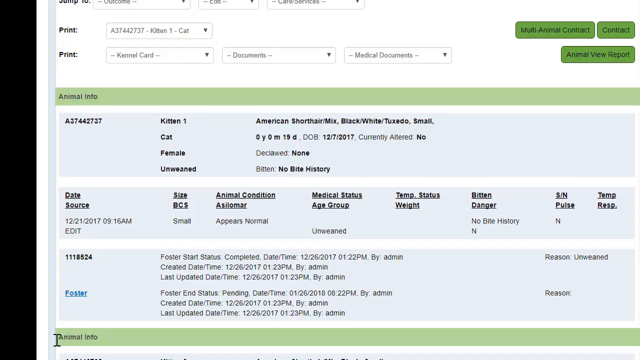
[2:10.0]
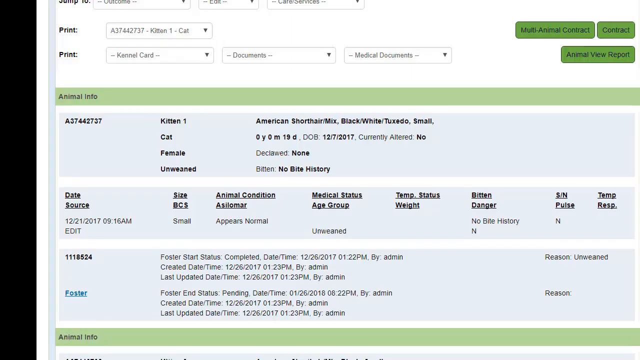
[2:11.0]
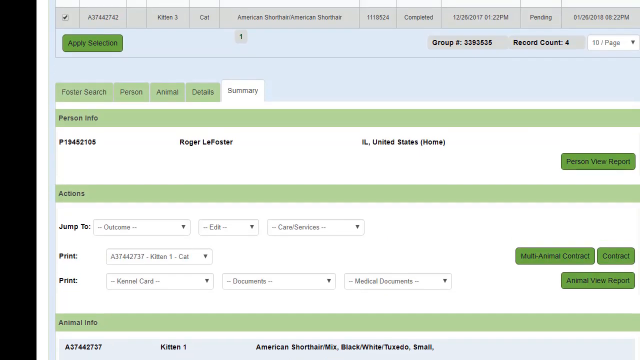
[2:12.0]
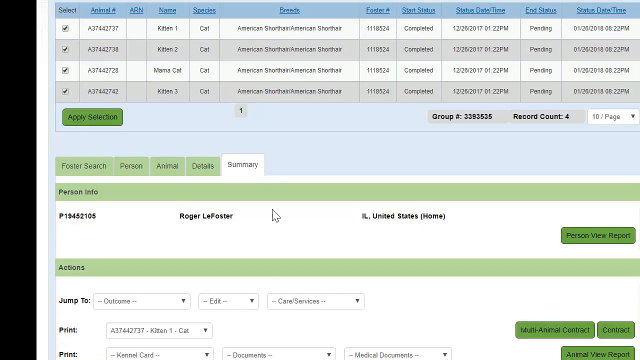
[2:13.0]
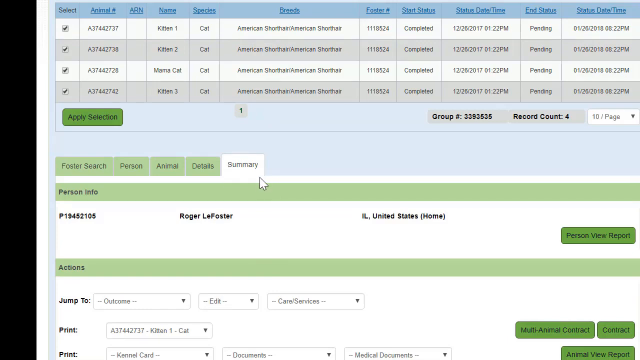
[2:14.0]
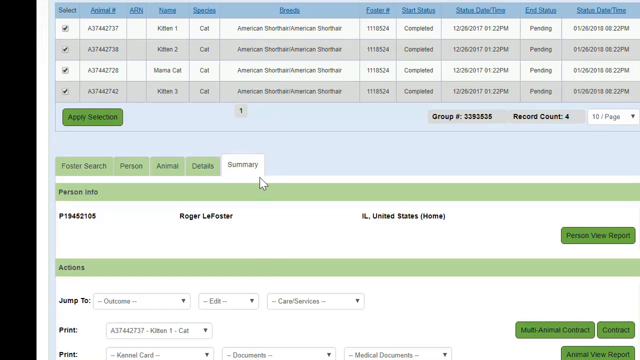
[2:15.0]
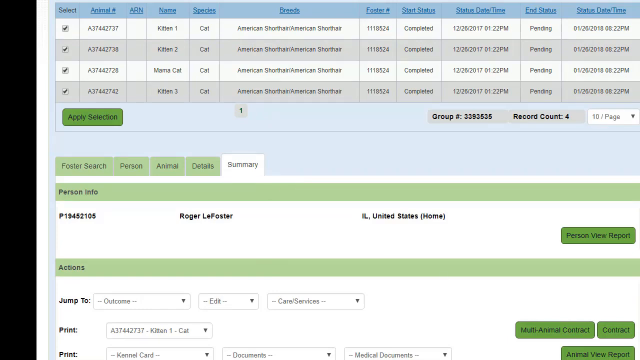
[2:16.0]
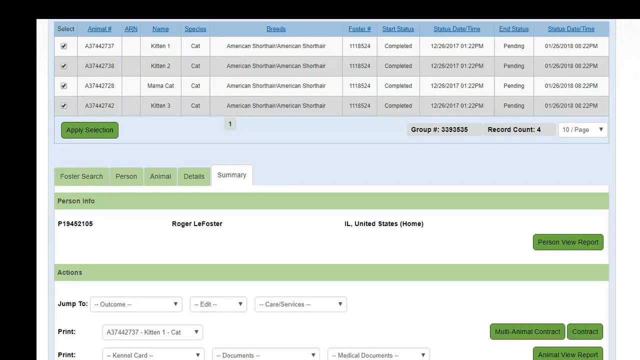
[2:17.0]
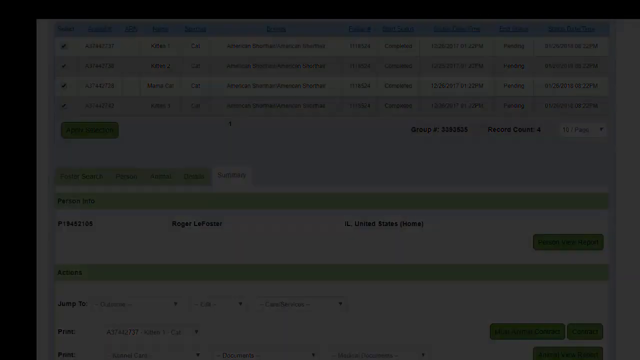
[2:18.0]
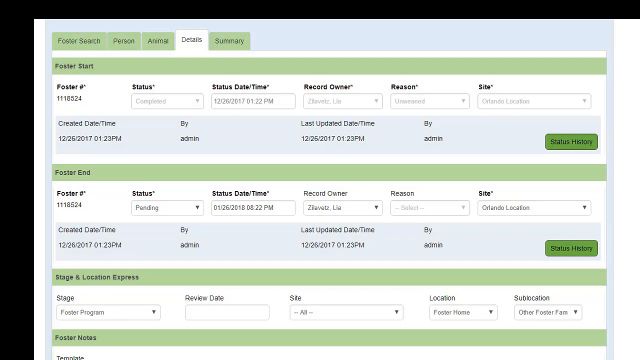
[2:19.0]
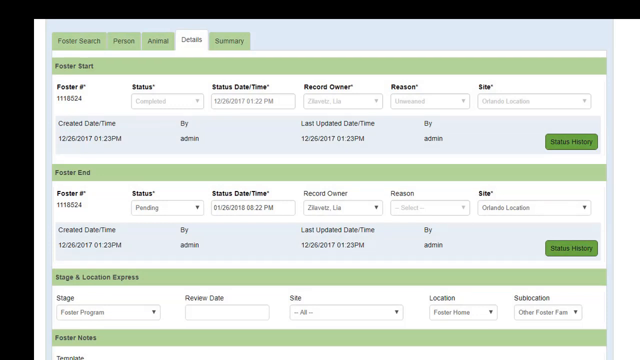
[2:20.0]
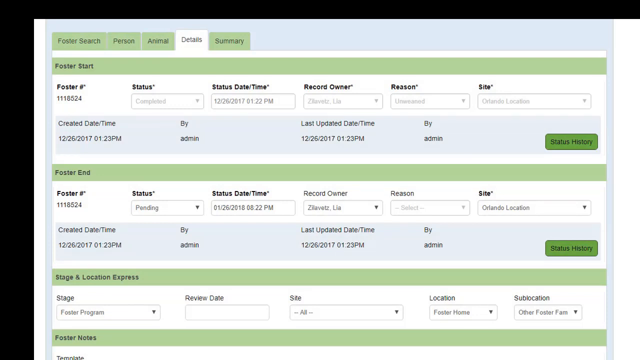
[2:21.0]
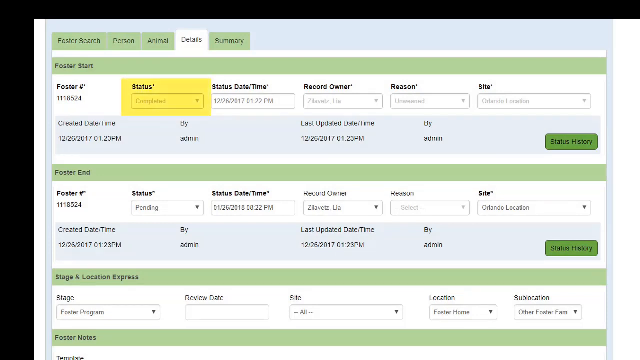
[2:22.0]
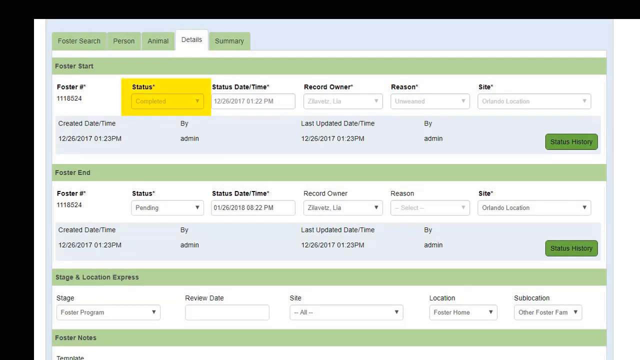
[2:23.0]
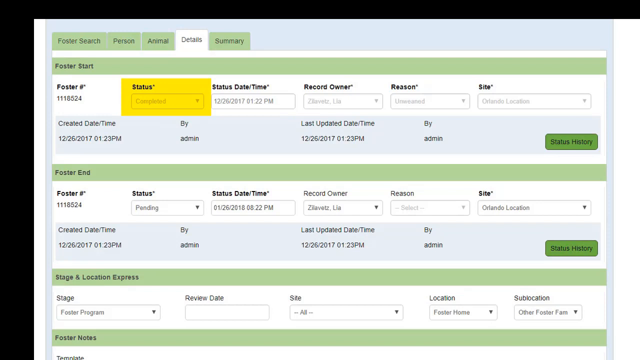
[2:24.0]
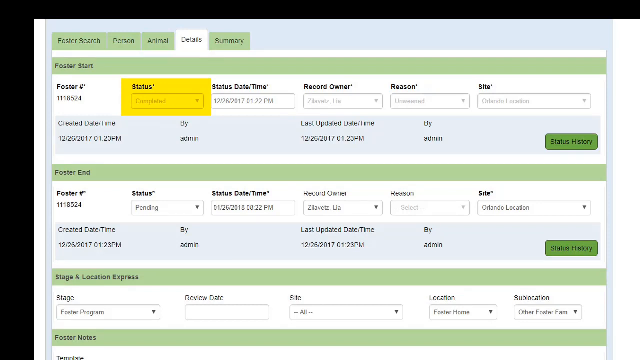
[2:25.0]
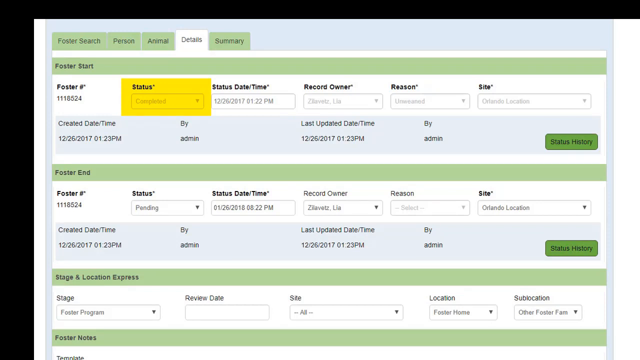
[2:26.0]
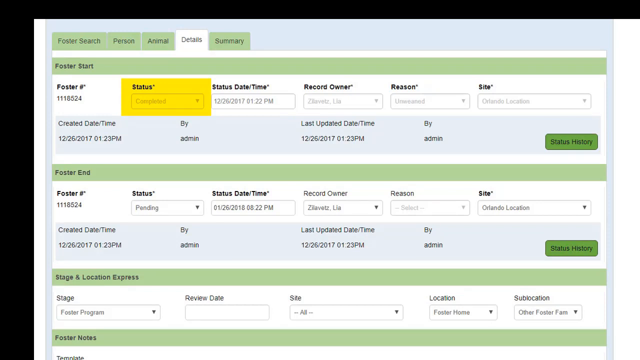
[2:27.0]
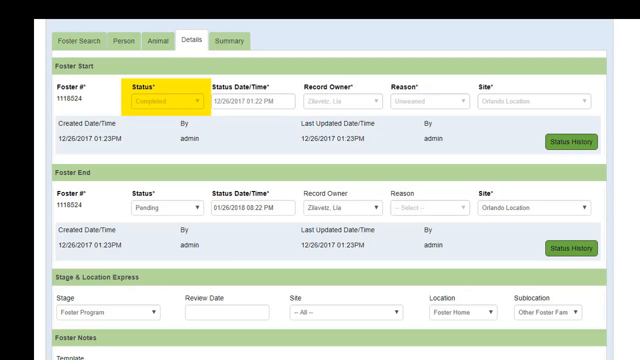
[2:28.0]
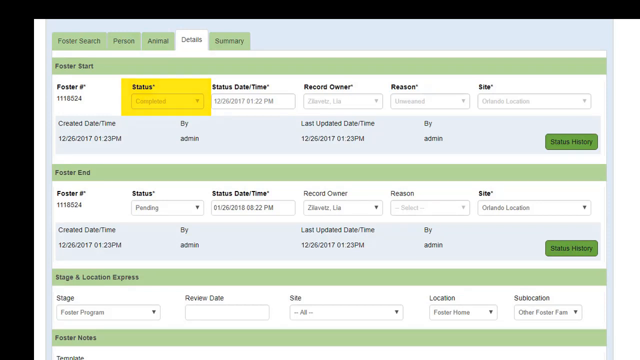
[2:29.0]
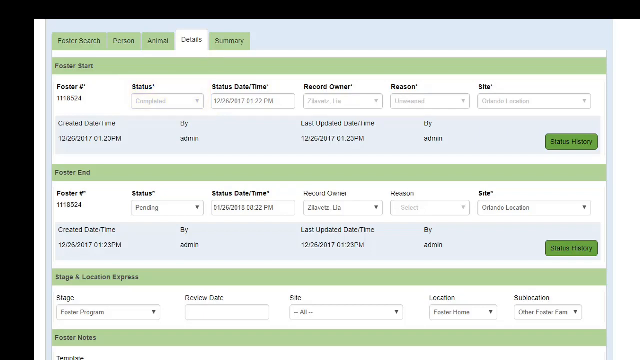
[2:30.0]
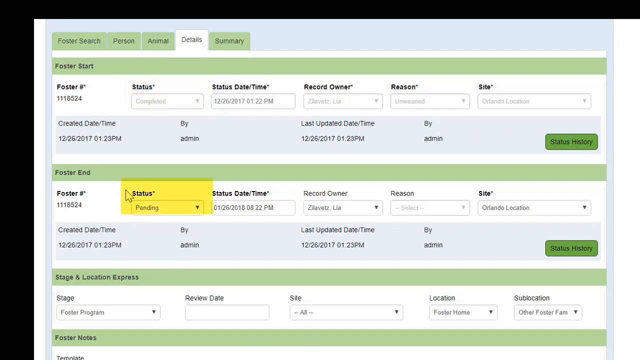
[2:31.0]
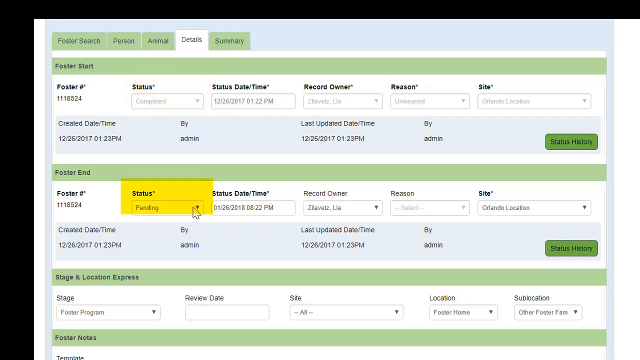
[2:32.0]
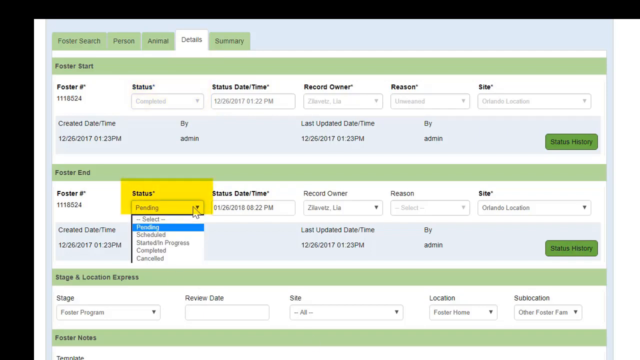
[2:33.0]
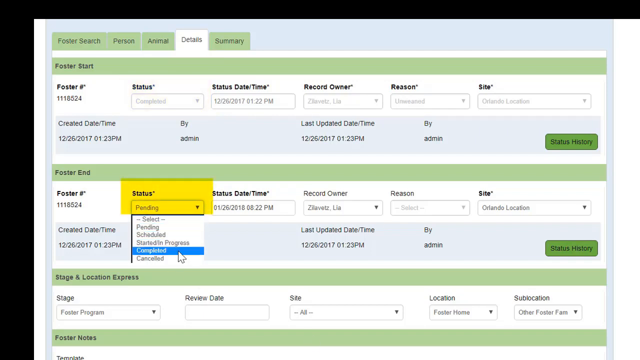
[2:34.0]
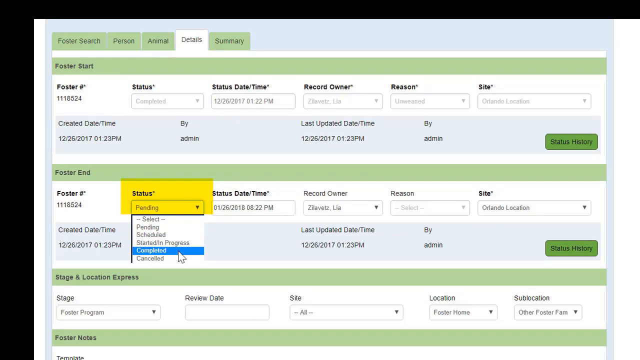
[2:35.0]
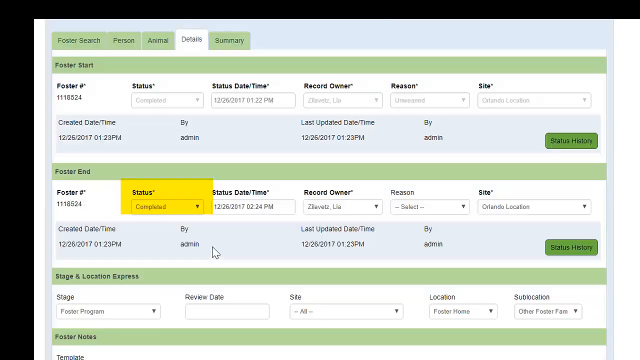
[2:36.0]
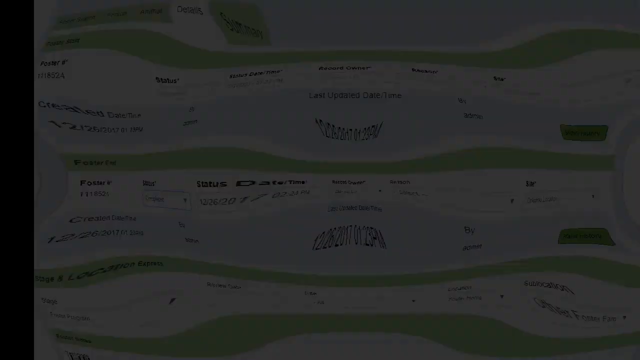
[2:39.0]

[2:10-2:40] The profile page for animal A37442737 shows animal specifications such as date of birth, gender and history of health, as well as details related to fostering and adoption. The user scrolls up the page; in the middle of the page the Summary tab is selected, showing results for a person named Roger LeFoster, and at the very top of the page a chart lists information for four different animals. The mouse hovers over the Summary tab for a bit, then the page fades to black and a new page appears showing what appears to be the Details tab, right next to the Summary tab, with information on the foster start and end times and the staging and location information. In the first panel, labeled "foster start," the Status drop-down menu is highlighted in yellow, and in the Foster End panel the Status drop-down menu is also highlighted in yellow; the user clicks that menu and selects the "completed" option.